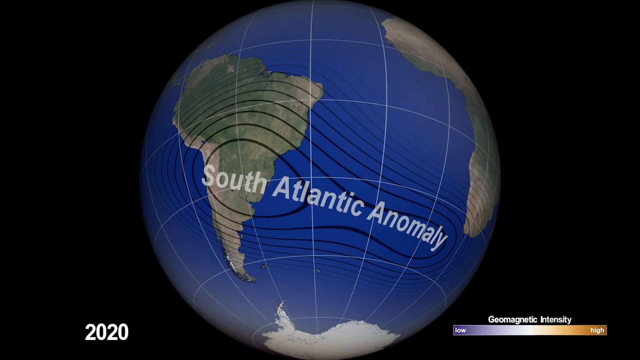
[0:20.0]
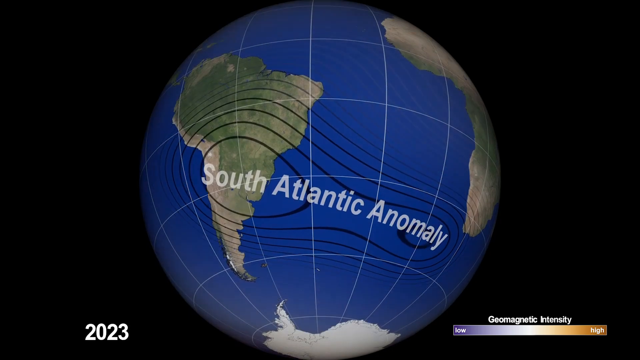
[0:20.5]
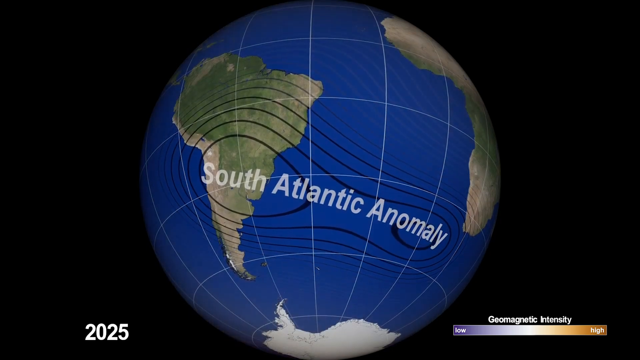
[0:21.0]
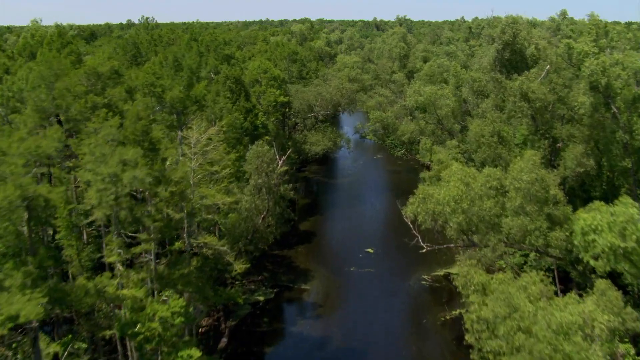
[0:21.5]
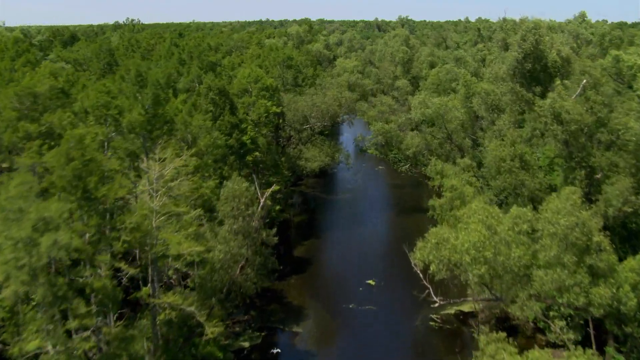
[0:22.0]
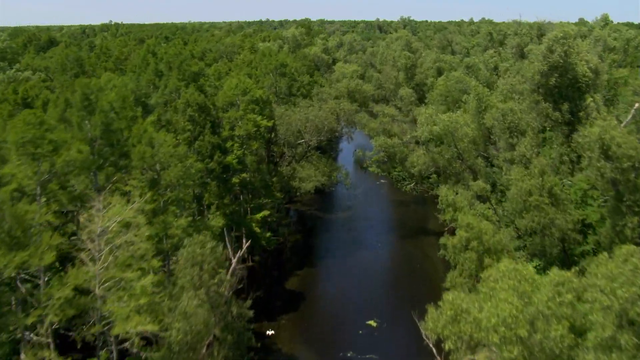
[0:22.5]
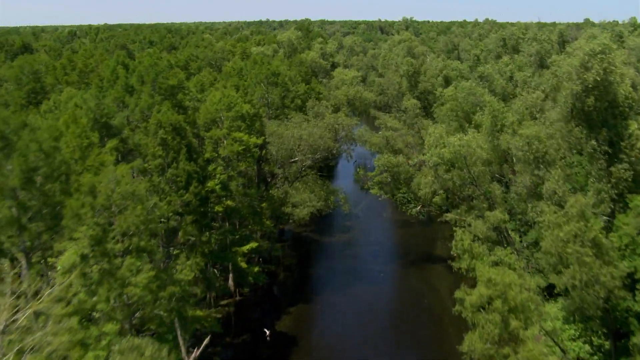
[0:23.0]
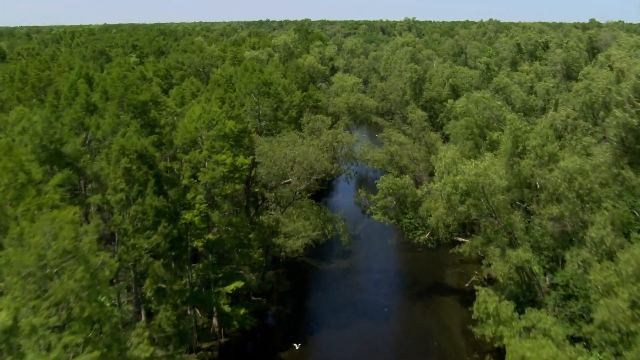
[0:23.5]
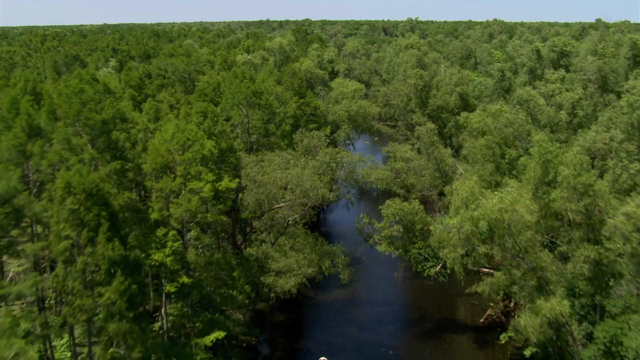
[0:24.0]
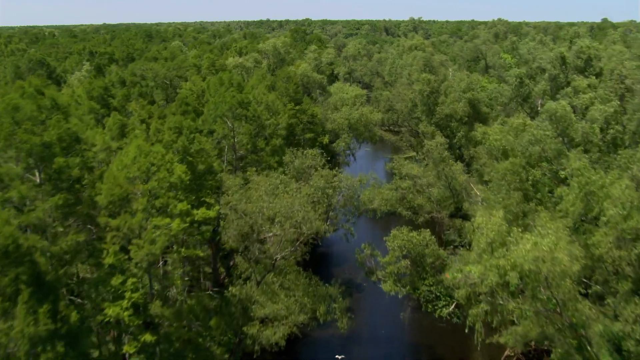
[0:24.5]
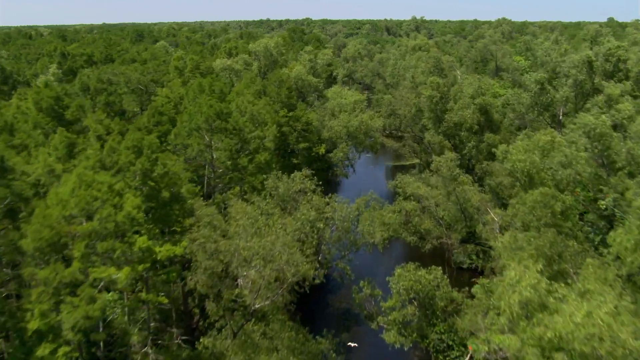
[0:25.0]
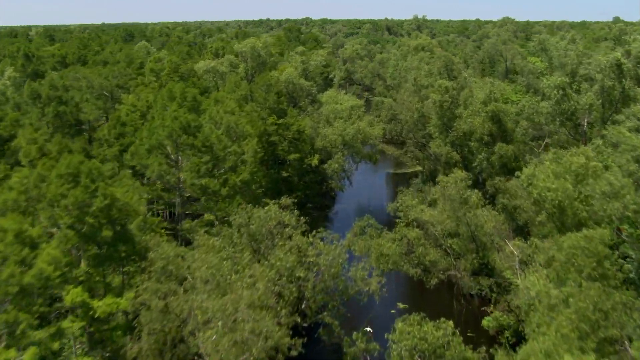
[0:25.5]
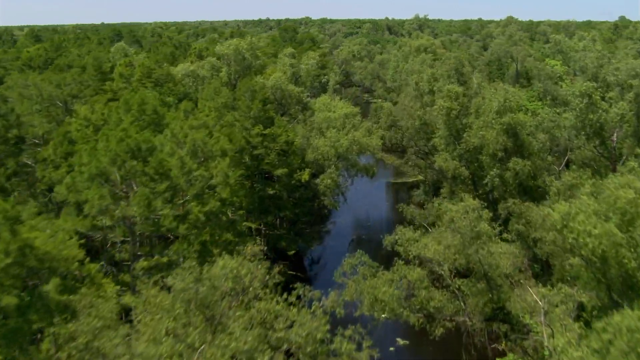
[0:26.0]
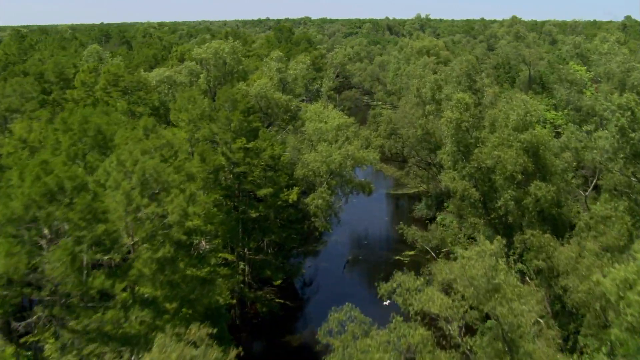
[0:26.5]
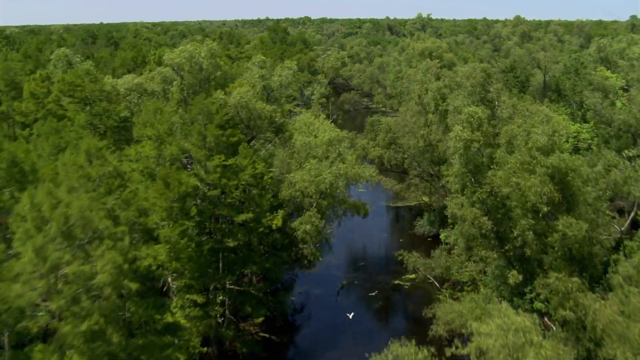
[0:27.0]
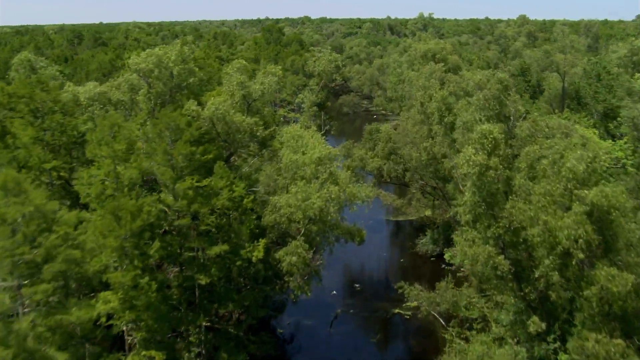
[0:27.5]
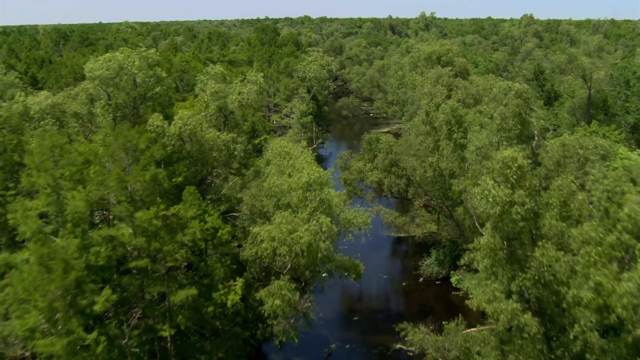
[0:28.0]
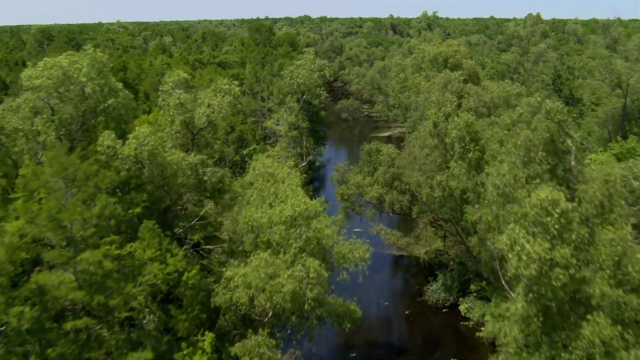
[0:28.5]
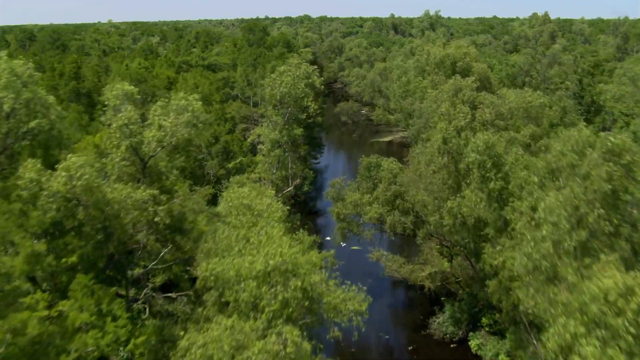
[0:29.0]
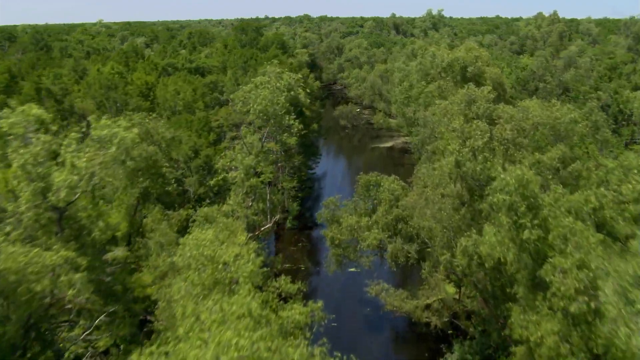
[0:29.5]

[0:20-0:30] A view of the globe is focused over South America, where there is a pattern of wavy lines and the words "South Atlantic Anomaly". The camera then begins panning over what first looks like a dense forest. Through the middle of the screen, as the camera continues forward, there appears to be a river or some other body of water, and the camera moves further and deeper into the forest along it. A couple of small white birds fly toward the bottom middle of the screen, following the path of the river through the forest. At the finish, a small portion of light gray-blue sky is visible along the top sliver of the screen.